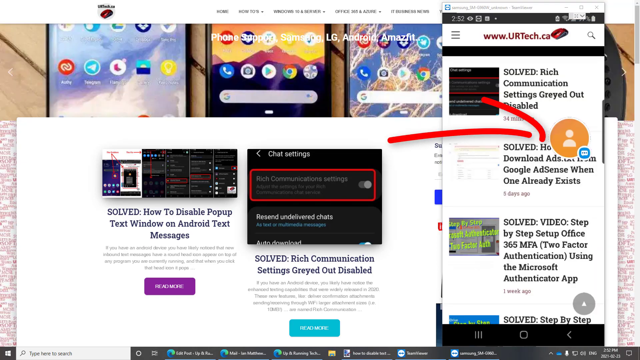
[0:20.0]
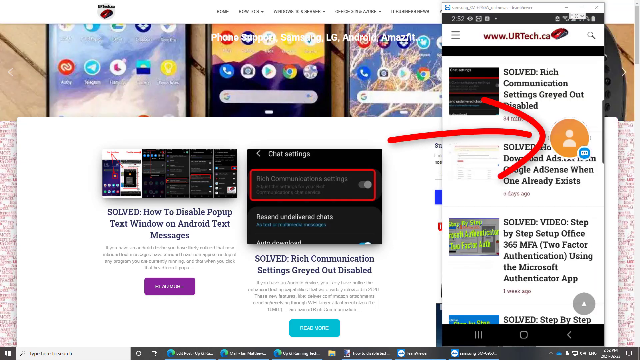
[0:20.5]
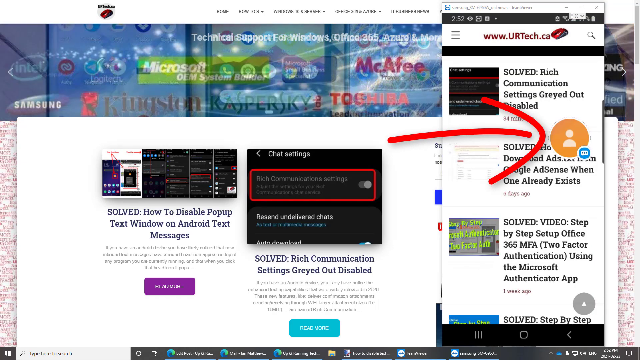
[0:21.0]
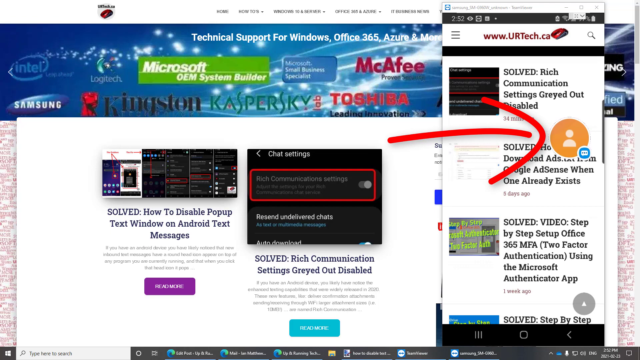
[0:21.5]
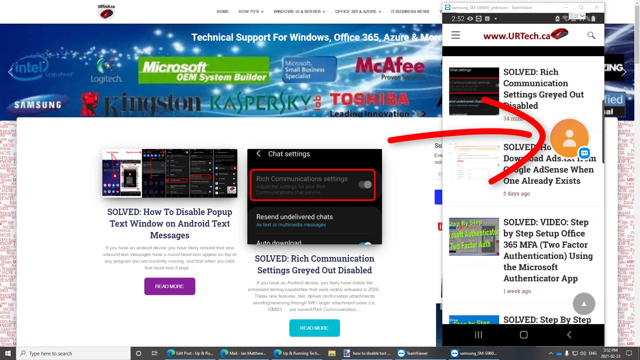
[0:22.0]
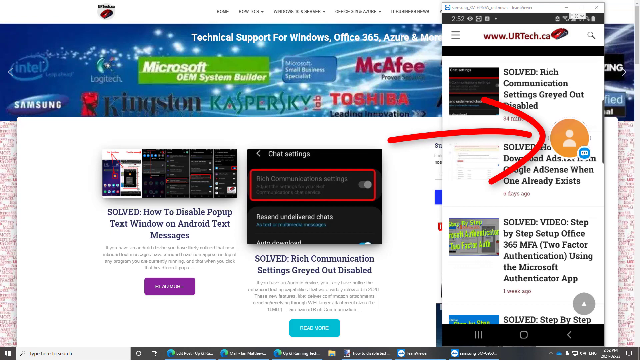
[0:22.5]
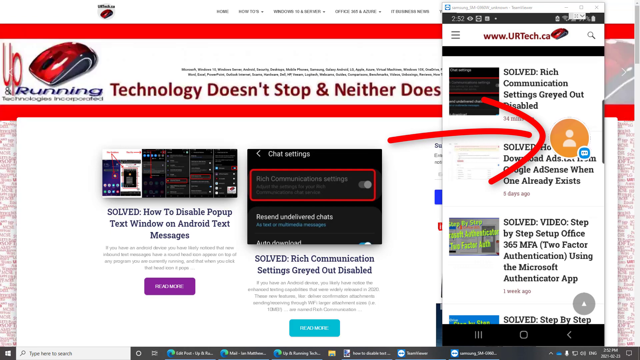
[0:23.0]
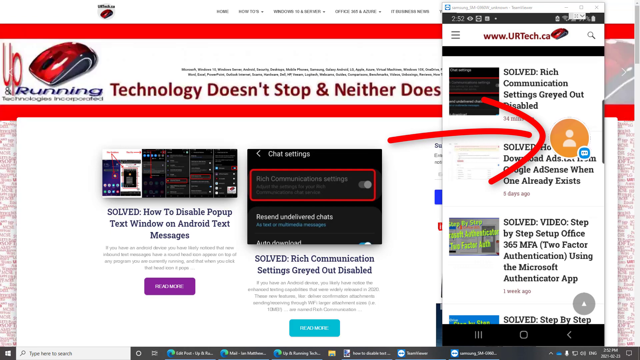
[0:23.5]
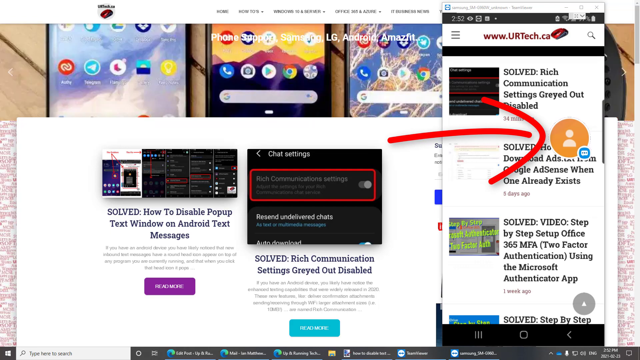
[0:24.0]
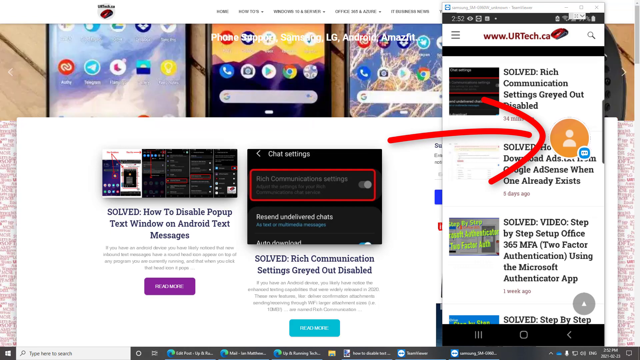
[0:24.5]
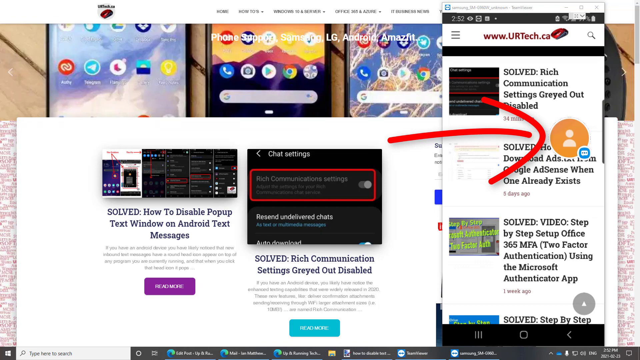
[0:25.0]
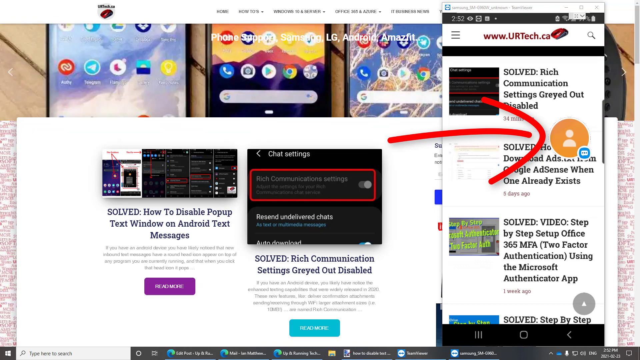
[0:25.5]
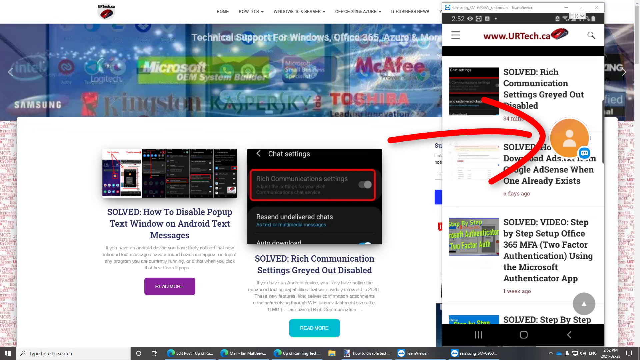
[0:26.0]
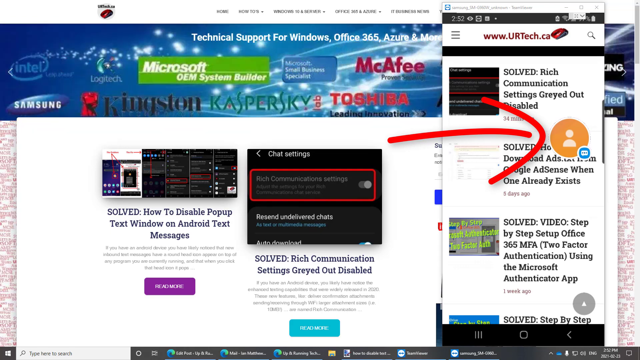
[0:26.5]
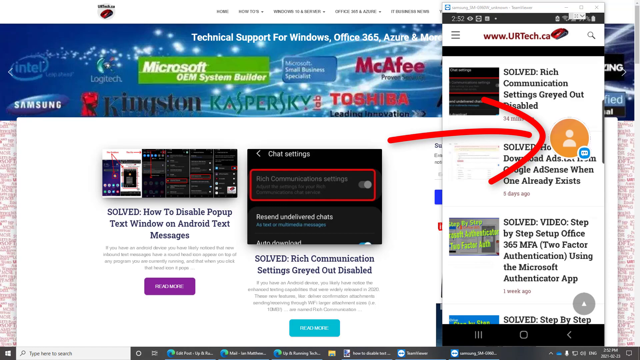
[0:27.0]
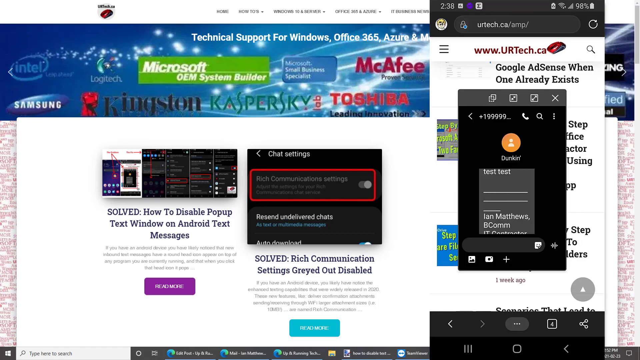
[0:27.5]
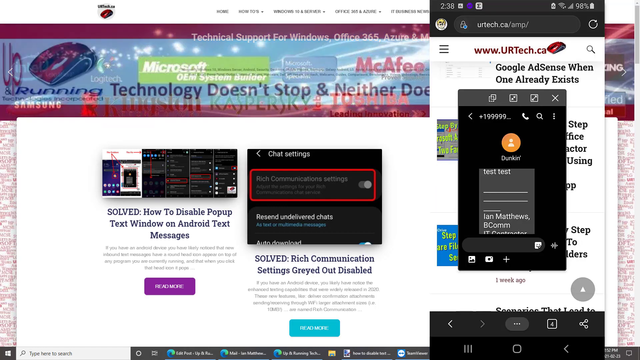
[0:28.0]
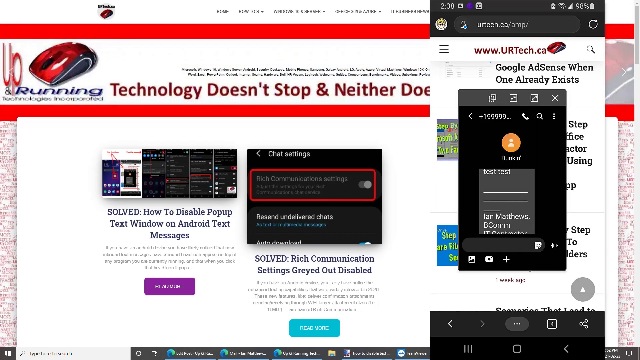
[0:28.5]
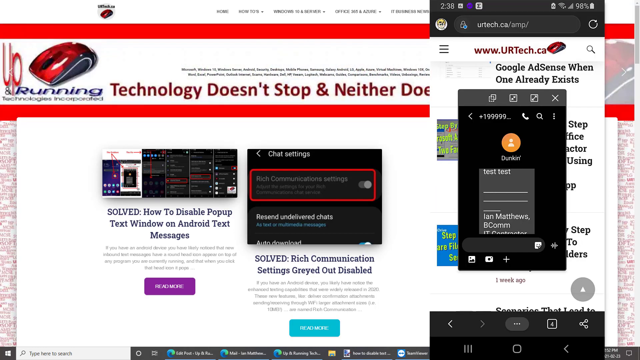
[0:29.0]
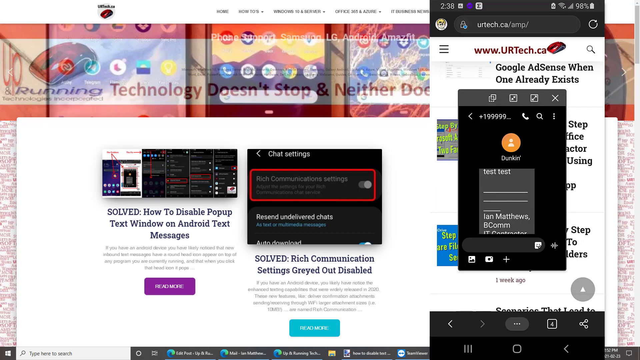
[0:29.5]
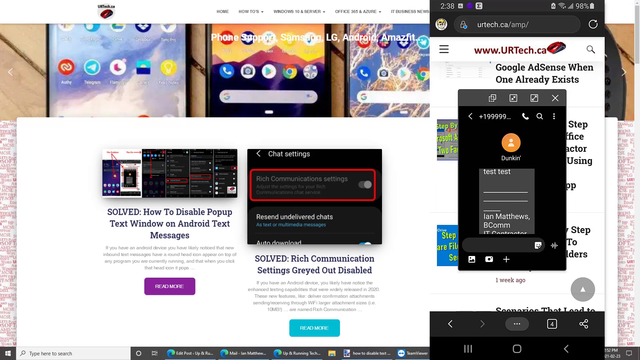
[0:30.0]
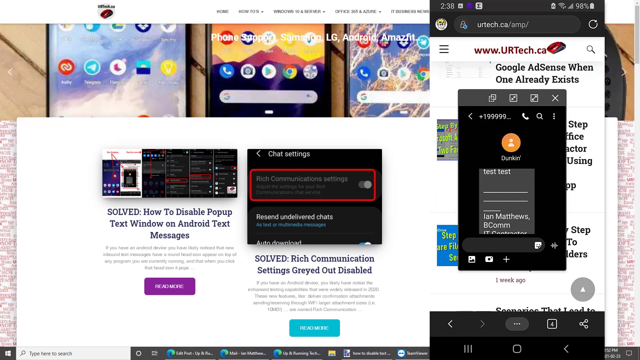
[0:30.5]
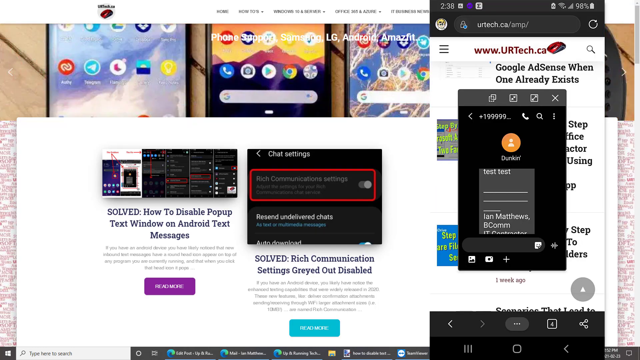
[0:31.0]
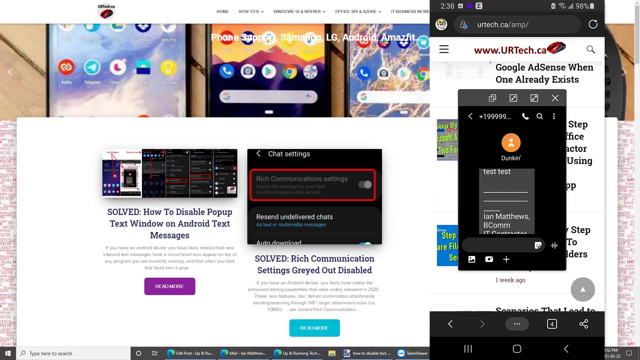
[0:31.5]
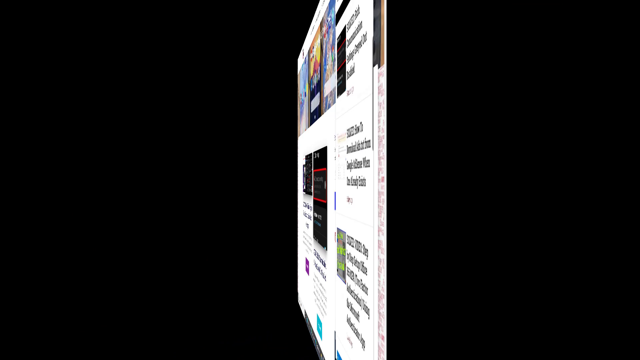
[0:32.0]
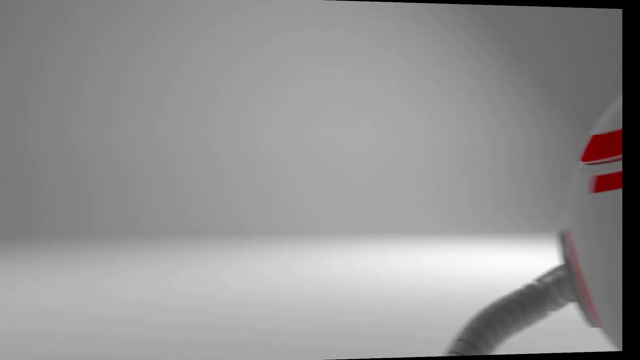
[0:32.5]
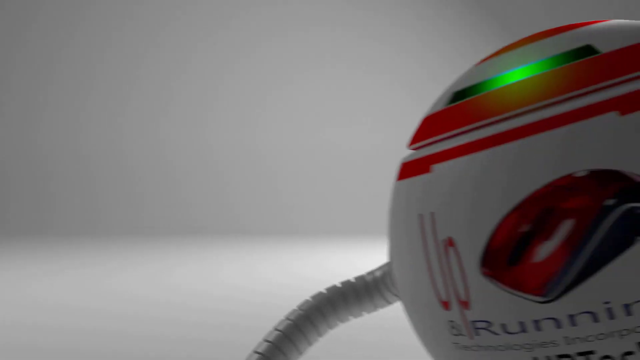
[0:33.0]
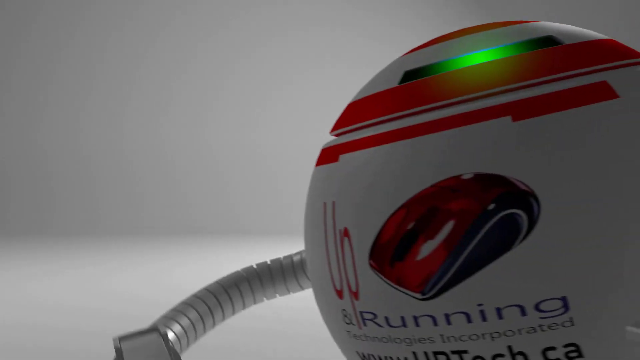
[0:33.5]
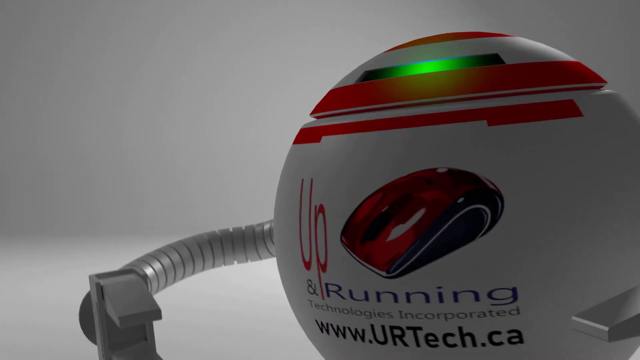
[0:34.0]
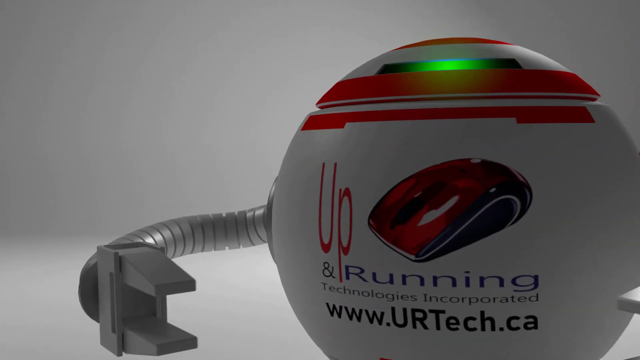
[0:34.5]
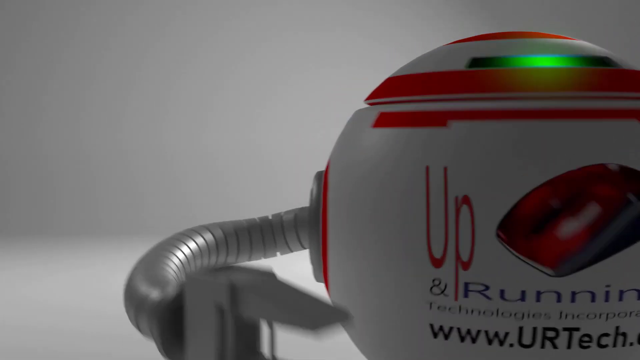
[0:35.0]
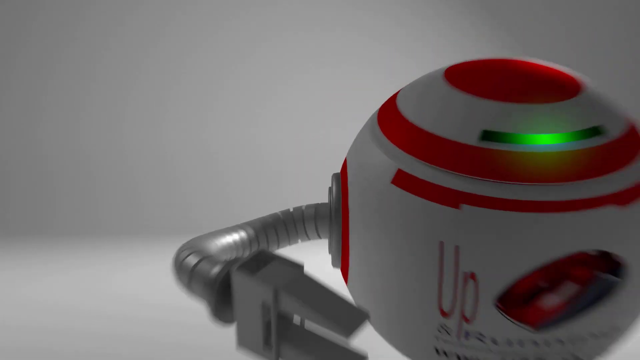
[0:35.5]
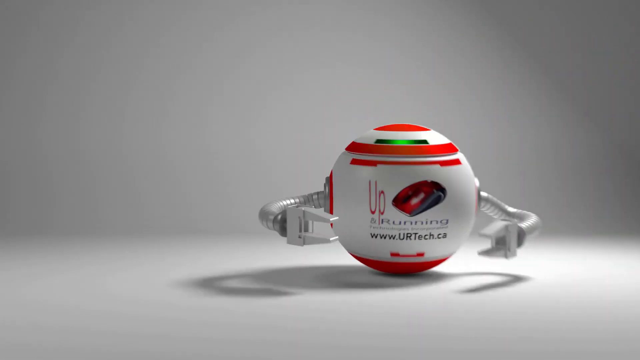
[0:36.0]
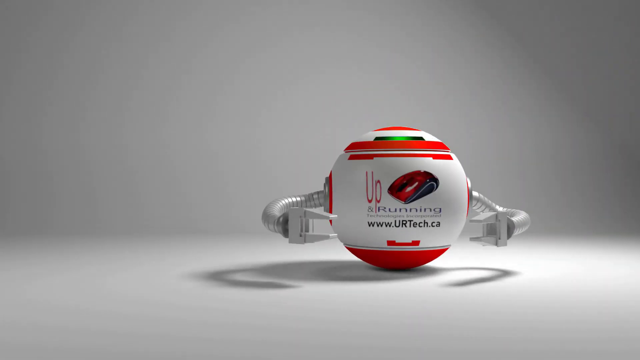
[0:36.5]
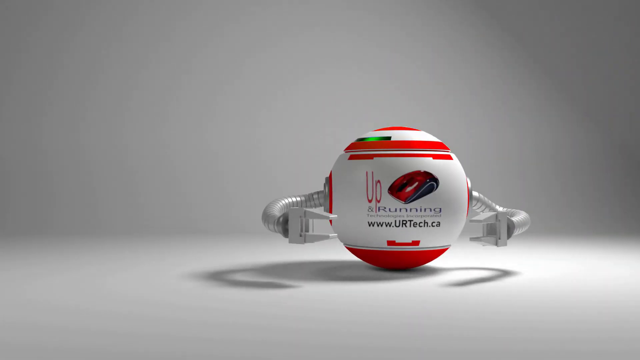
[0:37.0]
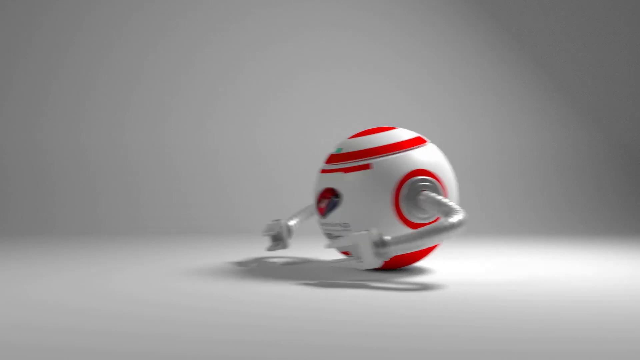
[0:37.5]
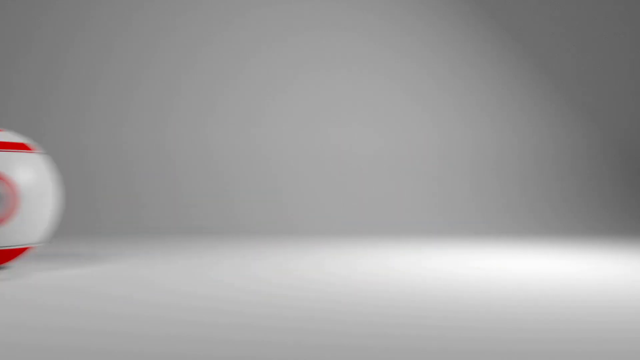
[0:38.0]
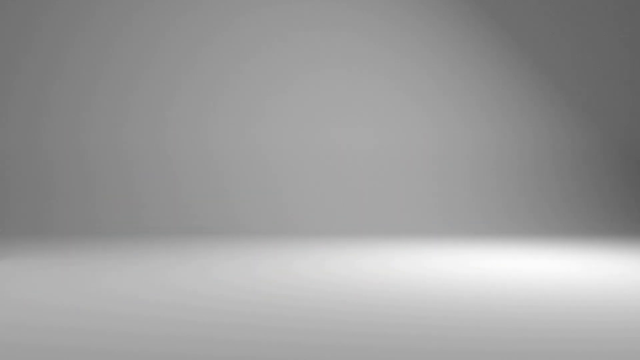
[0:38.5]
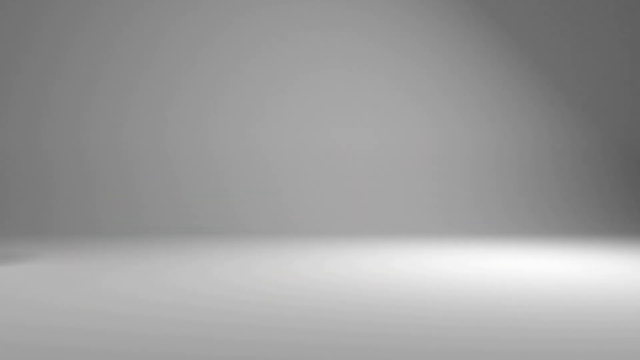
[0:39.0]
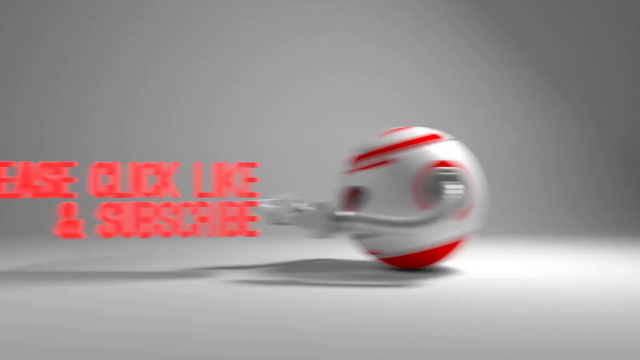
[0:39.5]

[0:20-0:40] The screen share shows a Windows 10 computer desktop with several Edge browser tabs open, where someone is looking up an IT how-to guide on a website. A screen share of a Samsung Android phone is dragged over, so the smartphone is apparently hooked up to the computer, and the person seems to be trying to solve an issue on the phone using the site. The site appears to be called URtech, and several ads for it pop up. At one point the desktop screen share is wiped away and a brief URtech ad appears asking the viewer to like and subscribe, suggesting the video is probably sponsored by URtech. Ads for URtech also run at the top of the site; they show a mouse and read "Technology doesn't stop, neither does you." Brief glimpses of the desktop behind show what looks like a photograph of several Android smartphones, similar to the phone screen share dragged into the video.